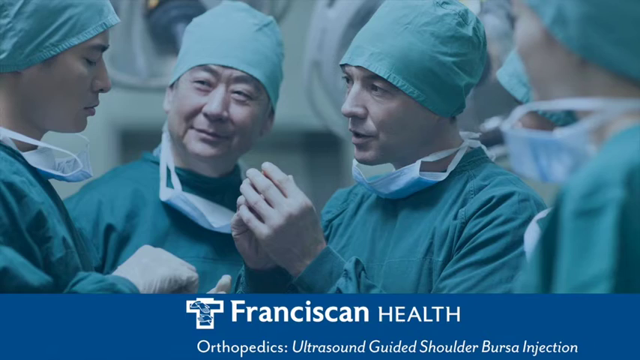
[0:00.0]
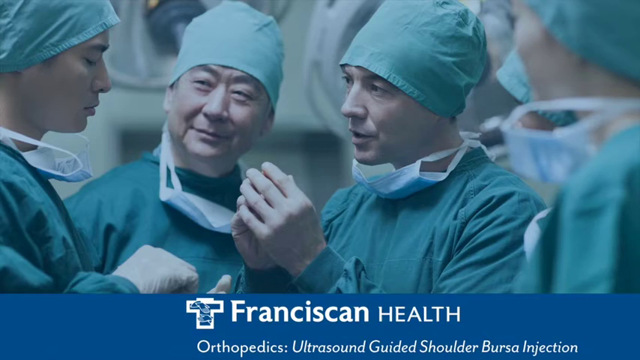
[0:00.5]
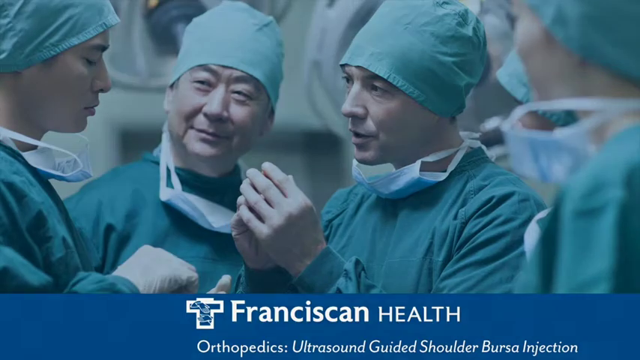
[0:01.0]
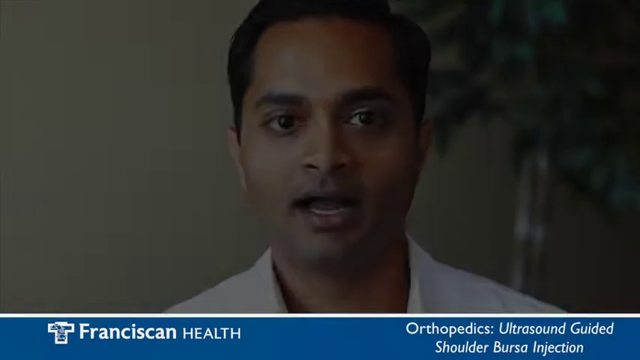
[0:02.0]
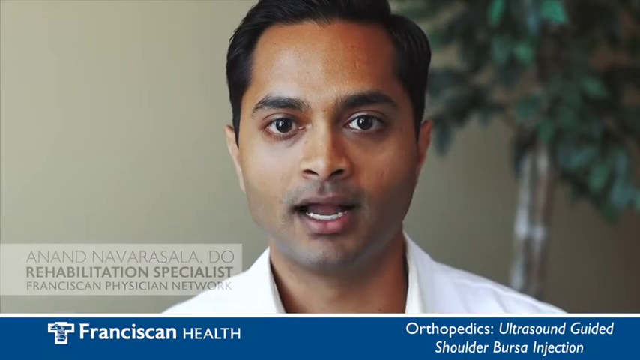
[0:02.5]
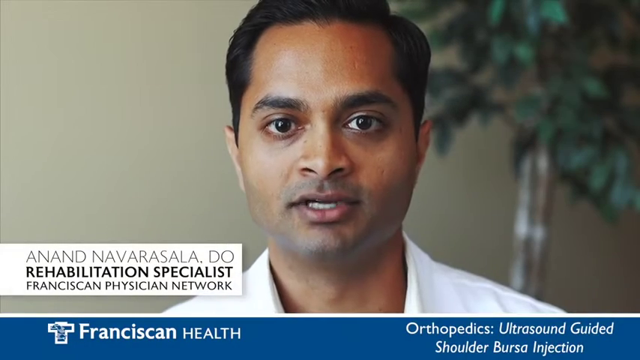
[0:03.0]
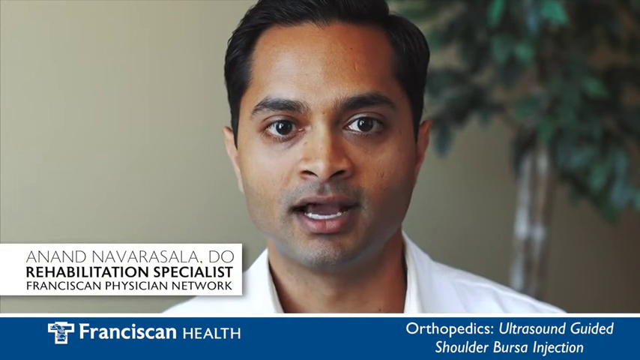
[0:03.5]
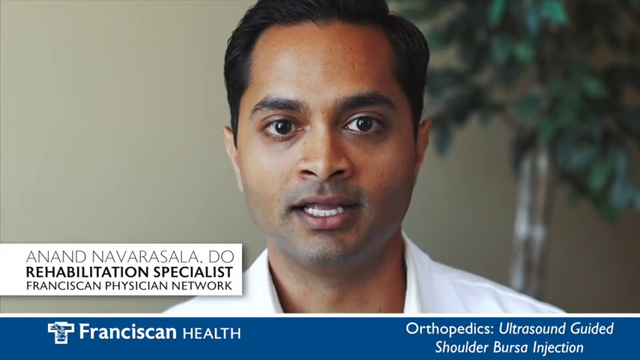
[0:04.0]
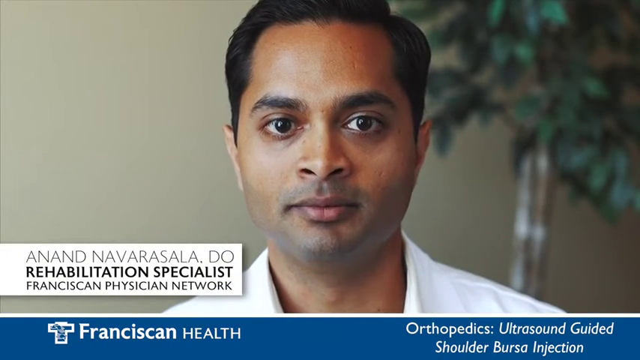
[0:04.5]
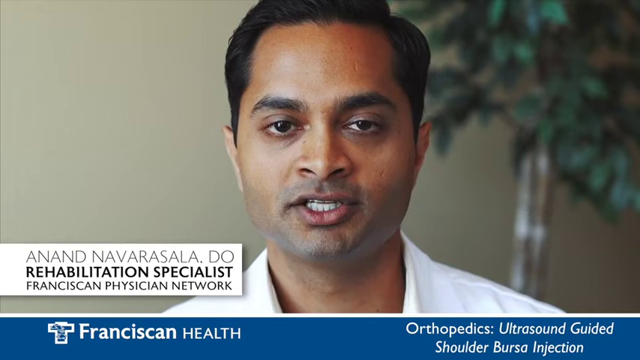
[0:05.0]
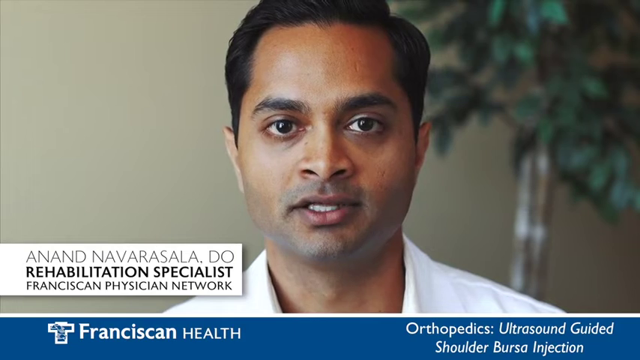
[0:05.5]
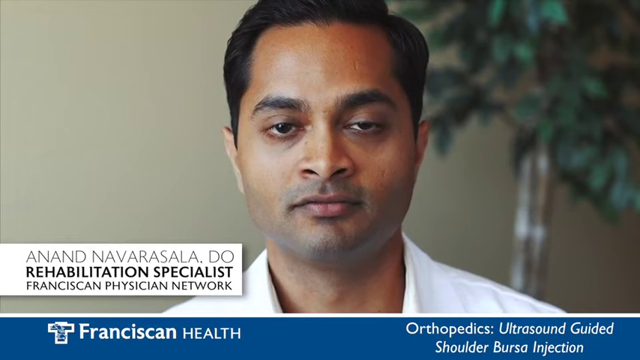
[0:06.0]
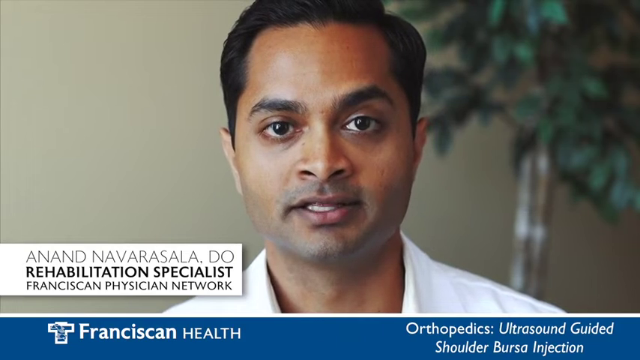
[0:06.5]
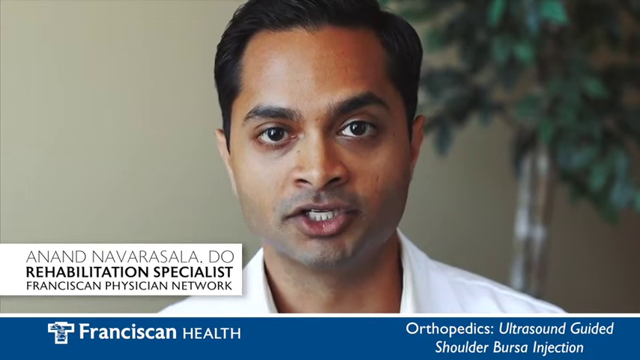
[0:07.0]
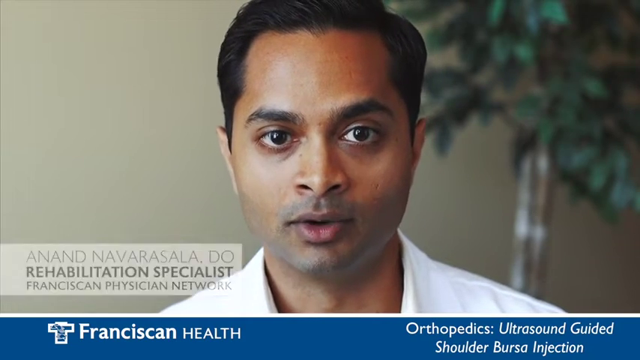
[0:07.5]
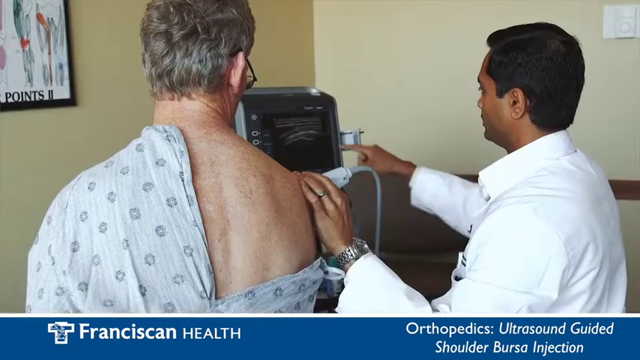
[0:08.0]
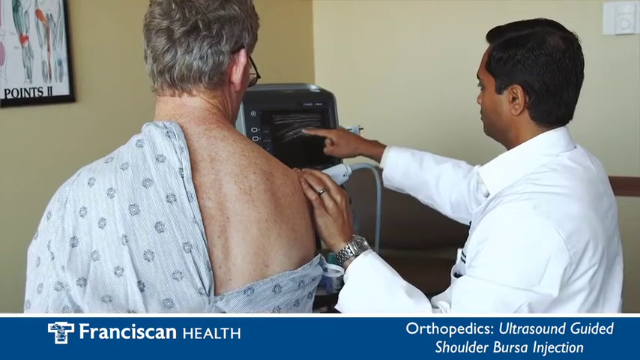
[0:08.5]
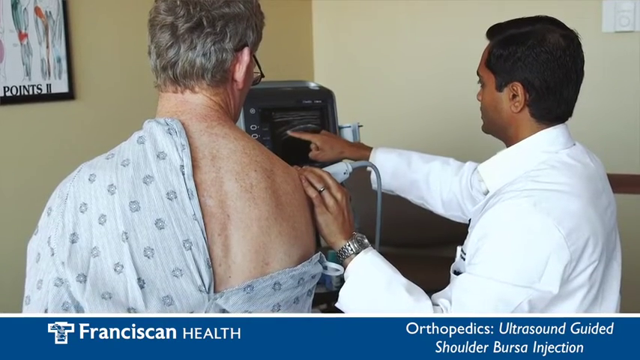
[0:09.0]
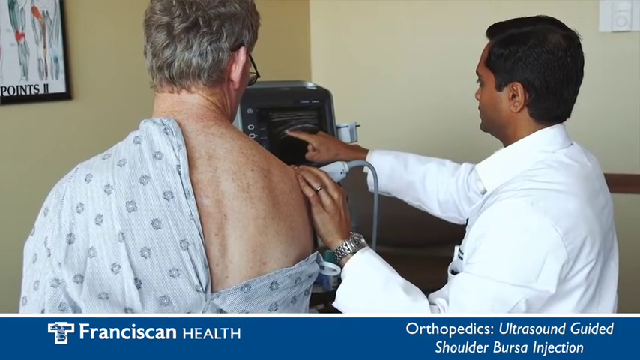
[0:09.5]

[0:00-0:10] The video opens on a title screen with a blue banner at the bottom reading "Franciscan Health." A group of people wear blue scrubs with face masks around their necks, and a man on the left talks intently to another man. The scene fades to a man identified by a white banner as a "Rehabilitation specialist": a person of color with brown eyes, black hair and no facial hair, talking to the camera. The camera pans to him attending to what looks to be a patient, holding a machine up to the patient's shoulder. The patient is a Caucasian man with graying hair and glasses.